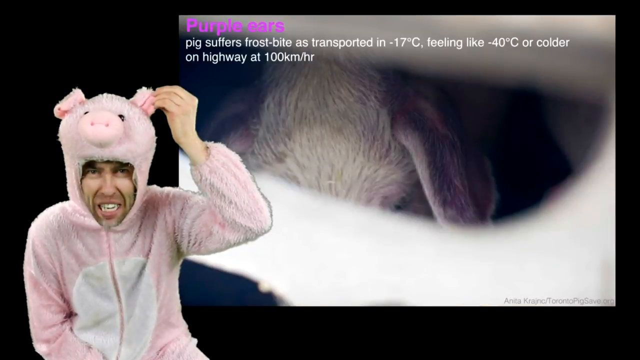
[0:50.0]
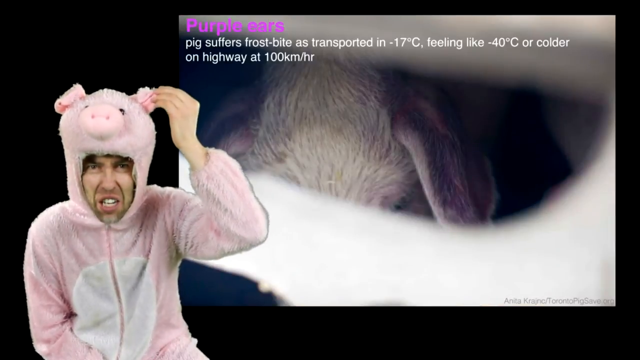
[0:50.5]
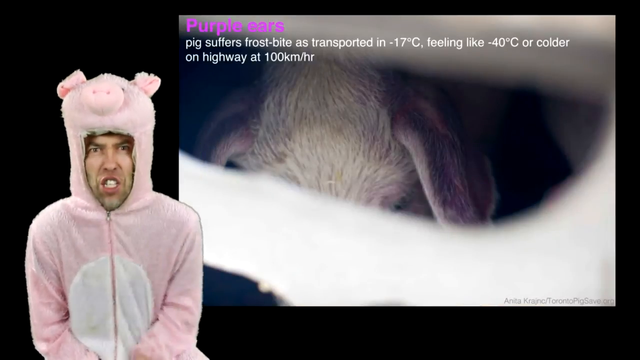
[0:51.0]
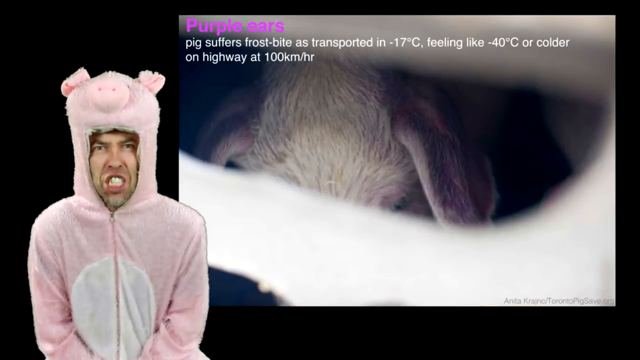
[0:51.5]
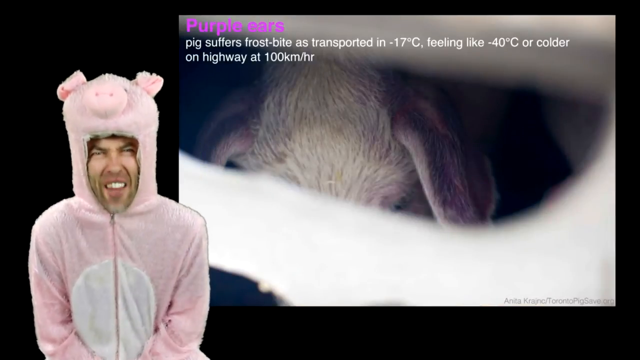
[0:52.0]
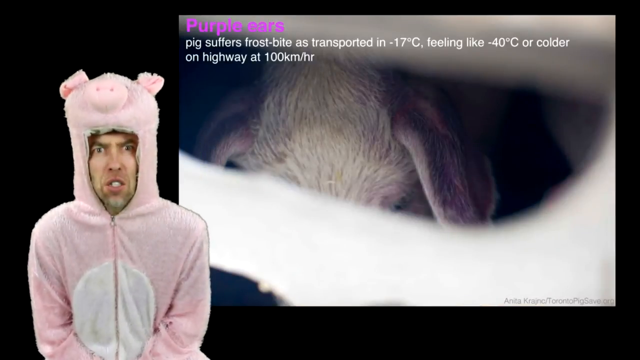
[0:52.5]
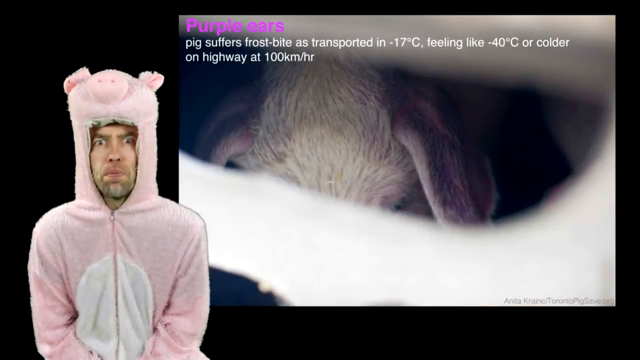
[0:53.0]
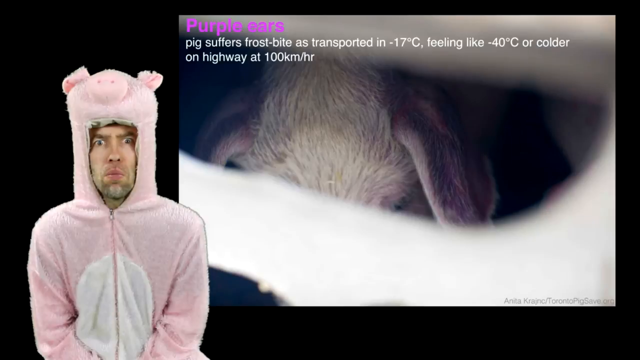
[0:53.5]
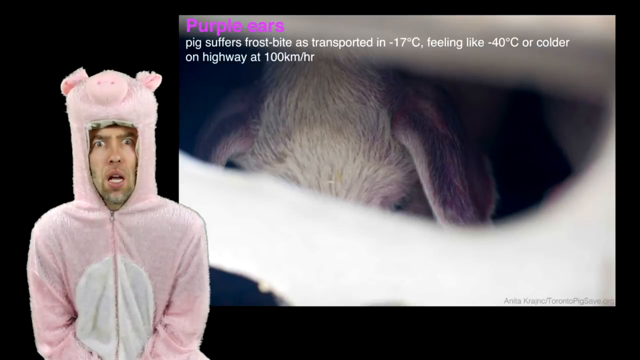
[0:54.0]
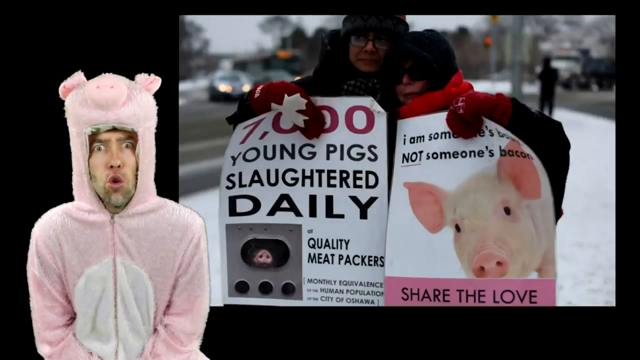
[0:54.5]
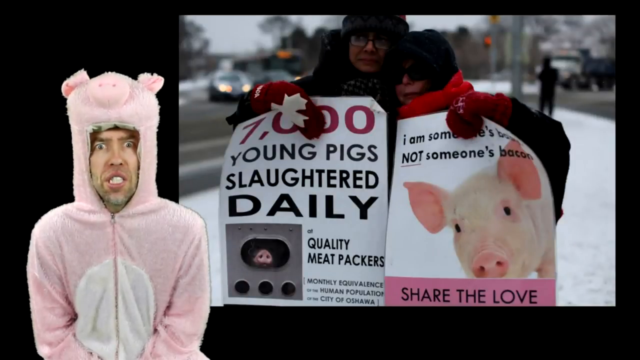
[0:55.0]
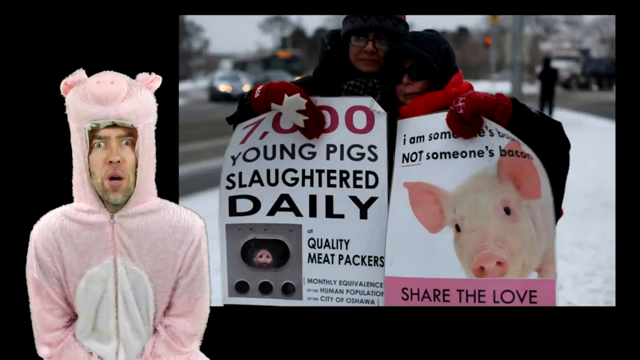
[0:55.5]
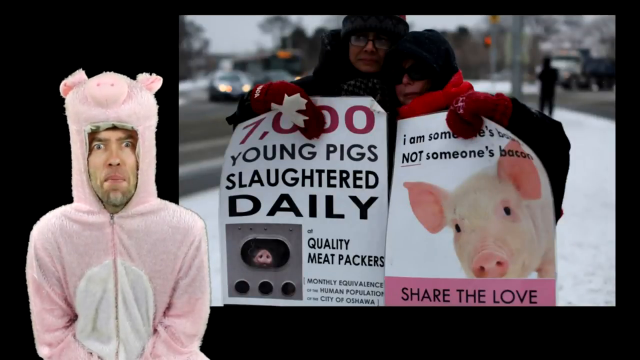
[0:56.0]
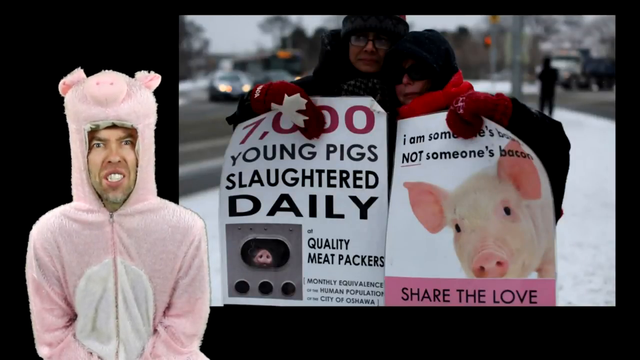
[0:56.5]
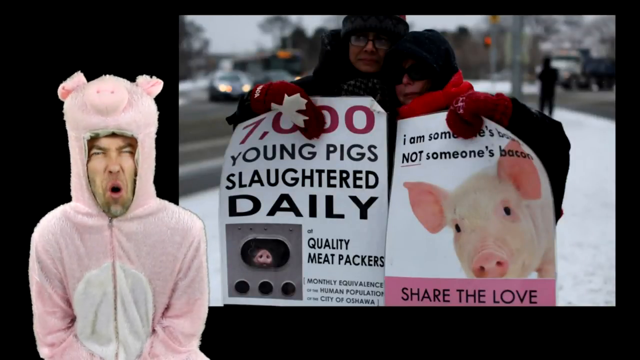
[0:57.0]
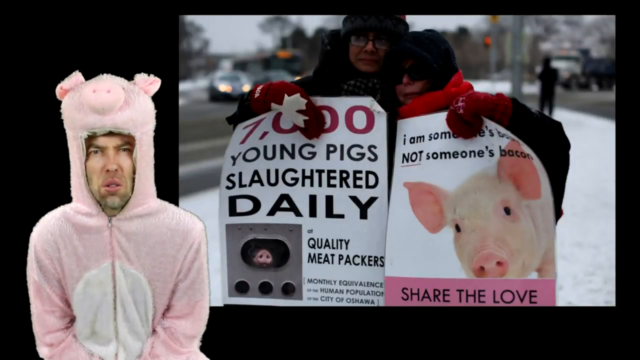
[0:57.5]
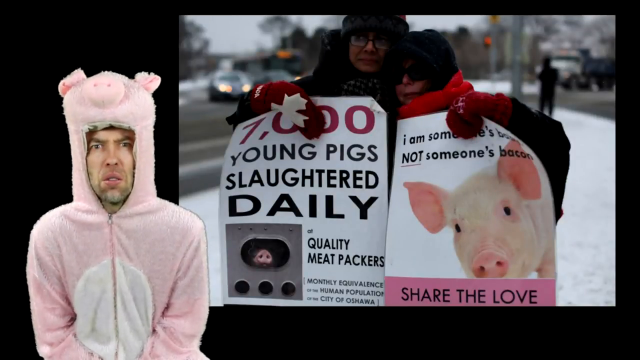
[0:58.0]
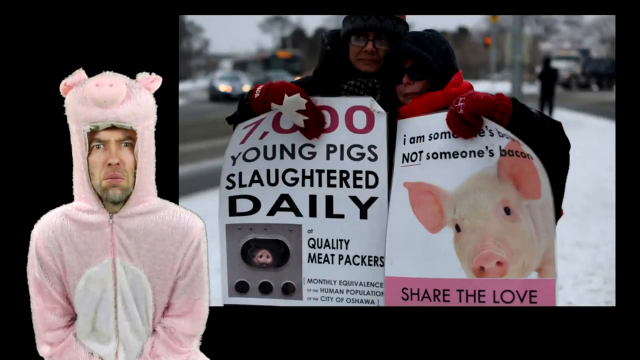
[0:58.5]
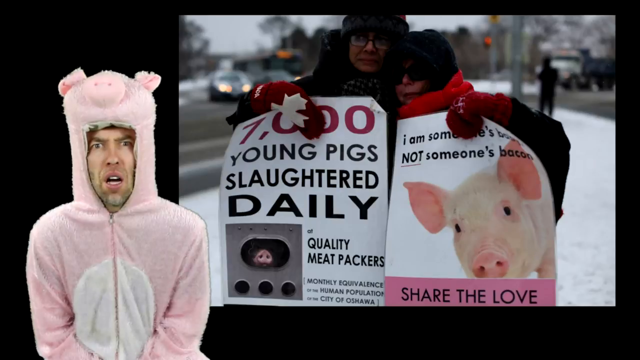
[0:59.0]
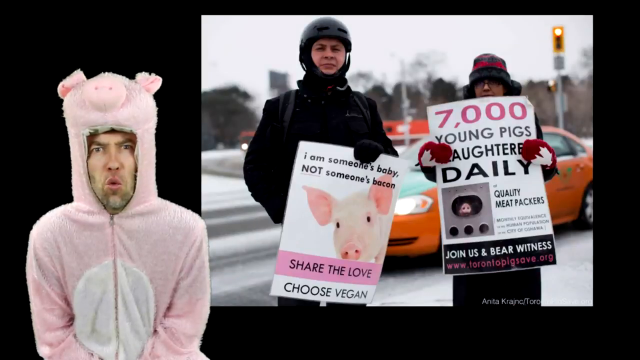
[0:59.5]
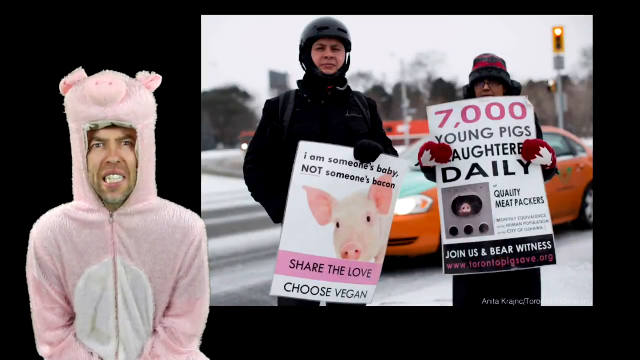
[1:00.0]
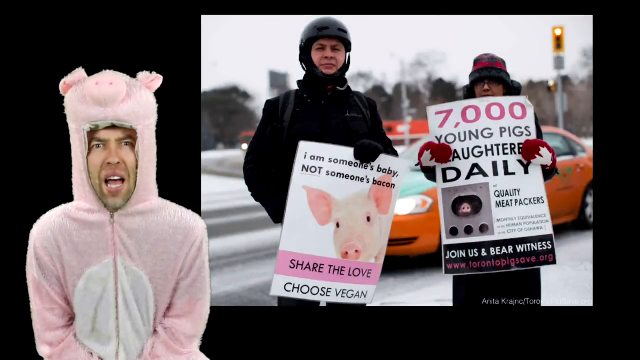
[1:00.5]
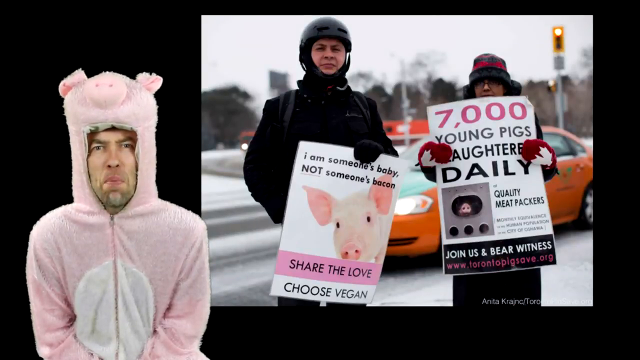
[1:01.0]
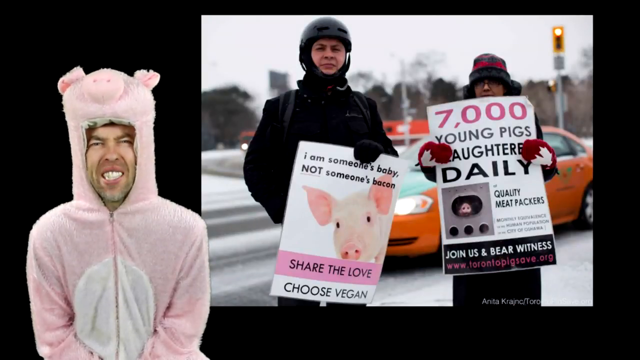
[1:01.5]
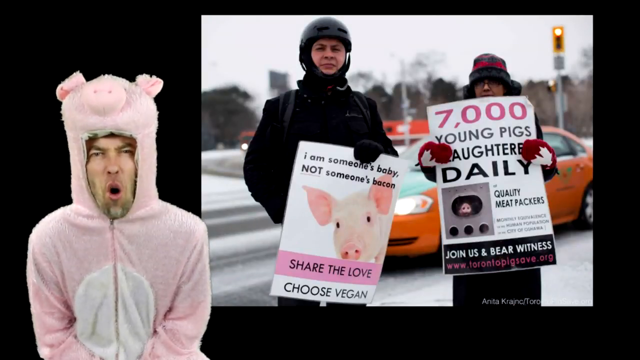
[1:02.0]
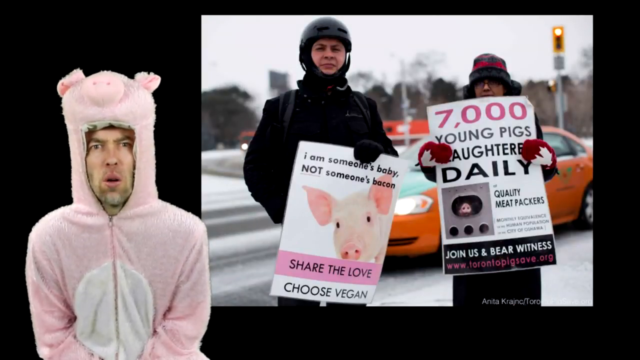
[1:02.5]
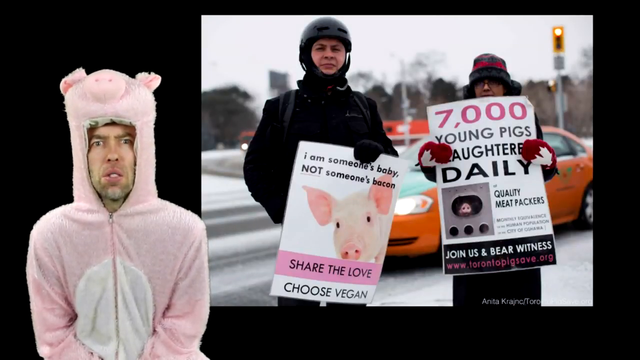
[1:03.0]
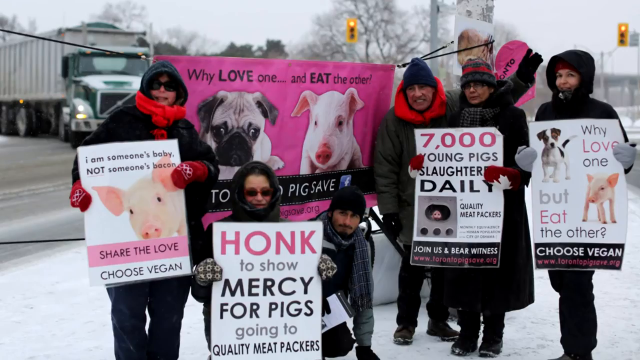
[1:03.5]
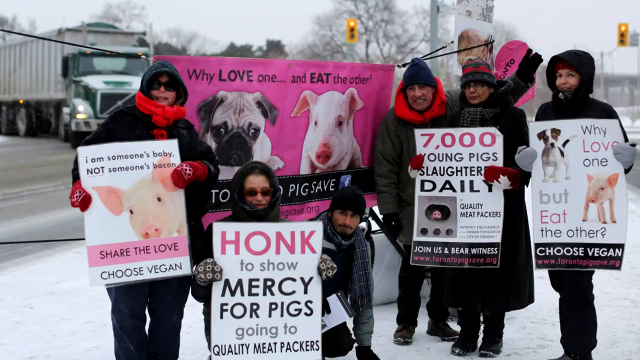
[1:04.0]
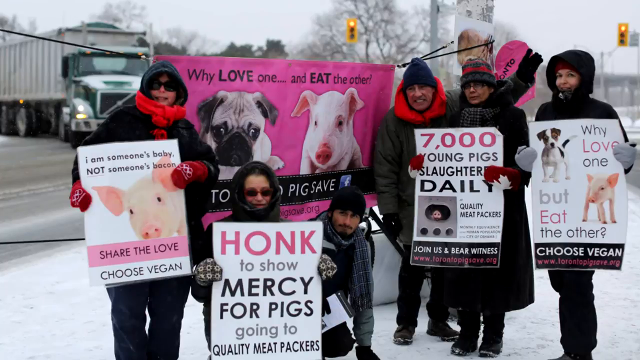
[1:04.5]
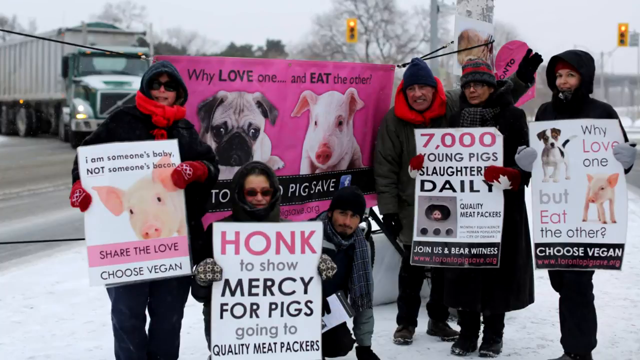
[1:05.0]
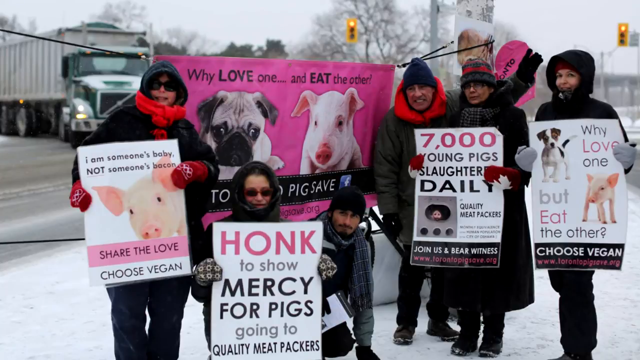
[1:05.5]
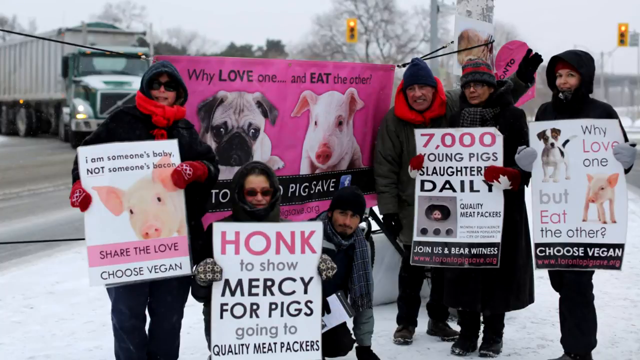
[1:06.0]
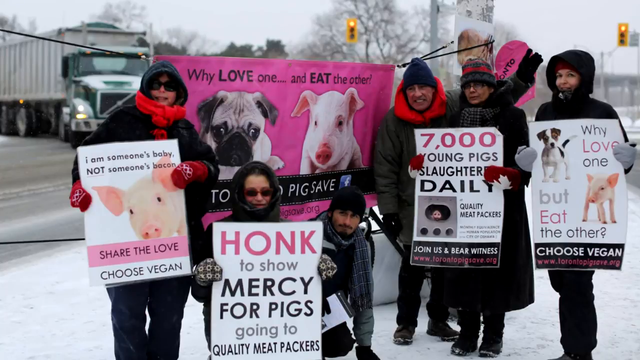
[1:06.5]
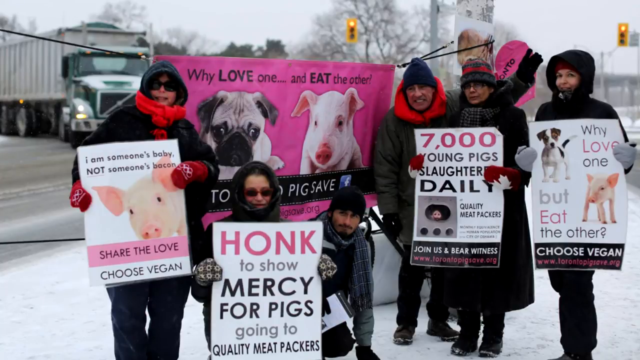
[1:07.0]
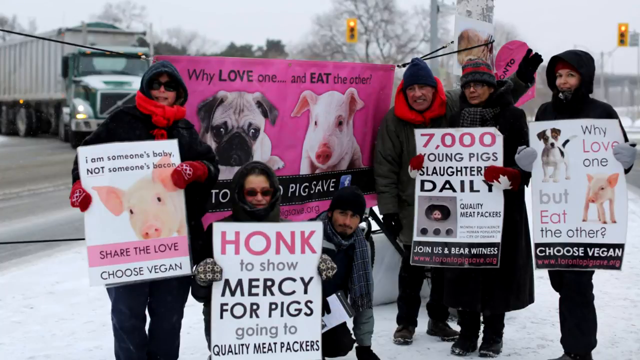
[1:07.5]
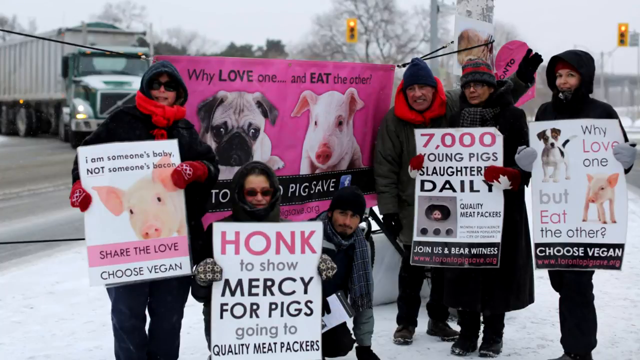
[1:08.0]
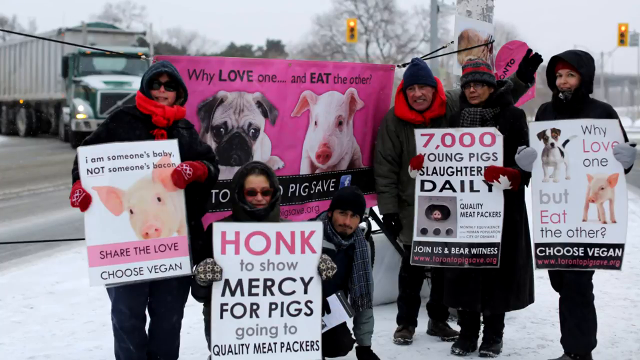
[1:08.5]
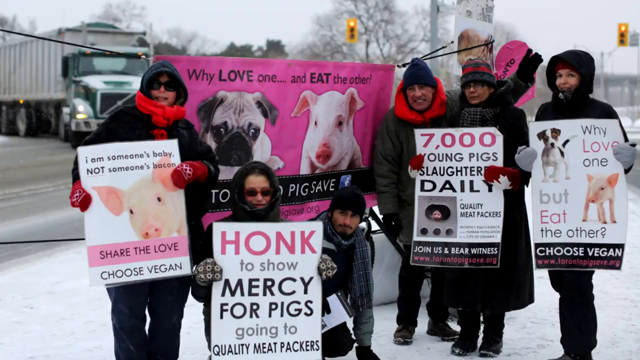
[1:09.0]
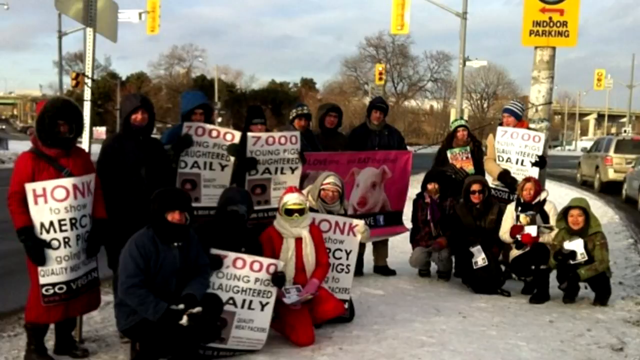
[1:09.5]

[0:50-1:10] The man in the pink pig costume appears, and on the right-hand side text reads "Pig suffers frostbite as transported in minus 17 degree celsius feeling like minus 40 degree celsius or colder on highway at 100 kilometer per hour". The man is still talking angrily and squeezing his face. Then a picture shows a woman with a red scarf around her neck holding two placards. One says "I am someone's baby not someone's bacon" with a picture of a pig, and "share the love" on the bottom part. The other says "7 000 young pigs slaughtered daily quality meat packers" along with other writing that cannot be seen properly, and it shows the snout of a pig coming out of the truck where pigs are loaded. Then two people appear: one in a black jacket and helmet holds a placard reading "choose vegan share the love i'm someone's baby not someone's bacon", and the woman now holds just one placard reading "7 000 young pigs slaughters daily quality meat packers join us and bear witness www.torontopigsave.org".